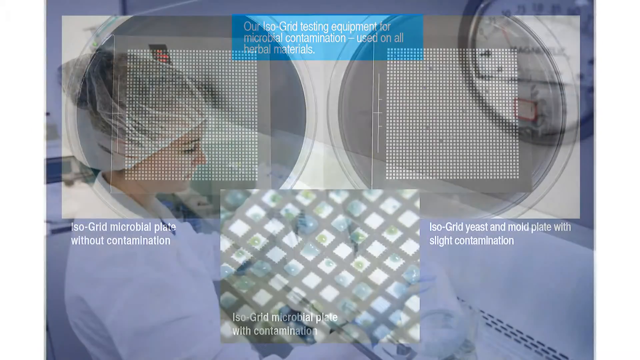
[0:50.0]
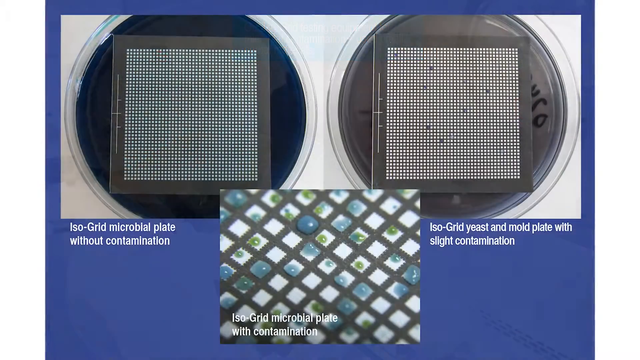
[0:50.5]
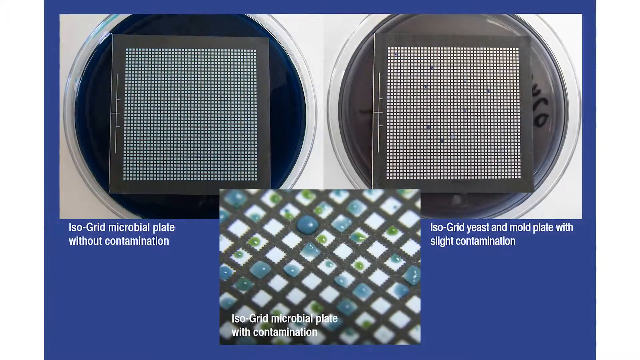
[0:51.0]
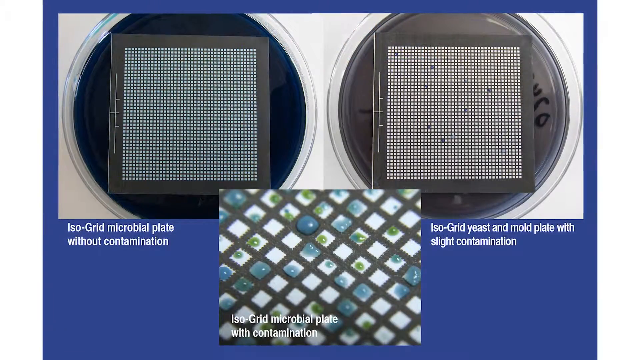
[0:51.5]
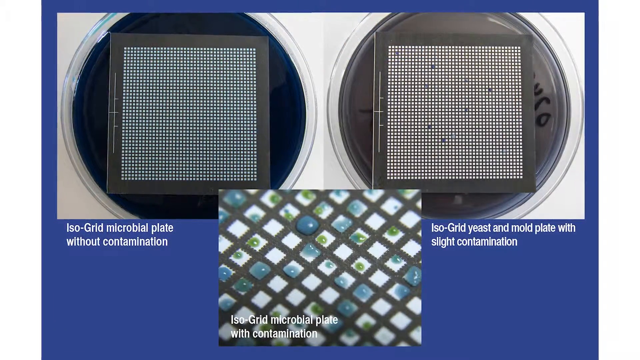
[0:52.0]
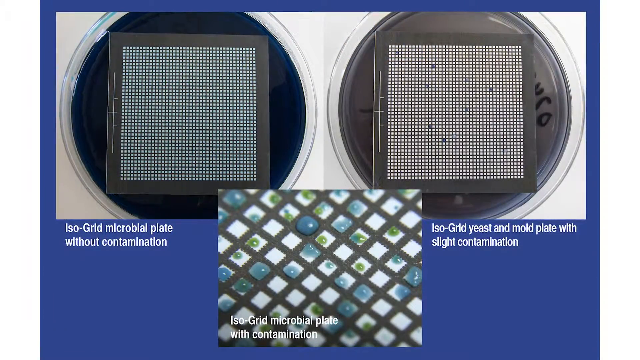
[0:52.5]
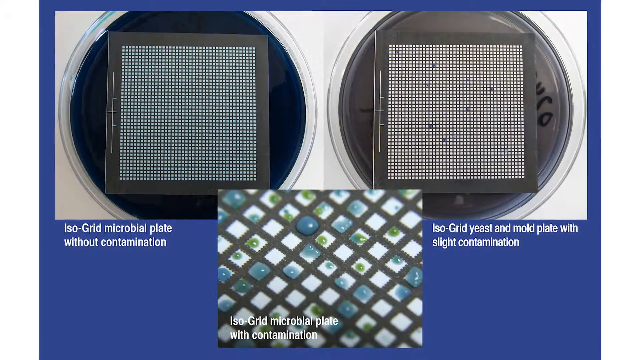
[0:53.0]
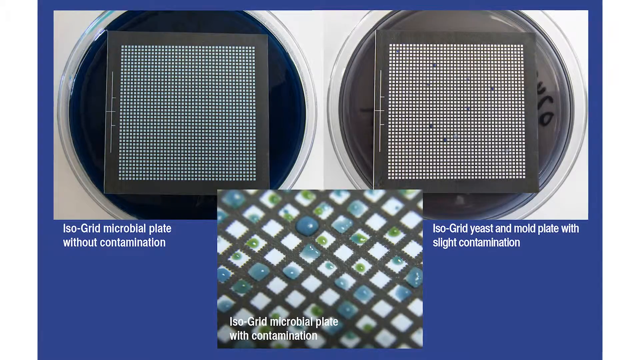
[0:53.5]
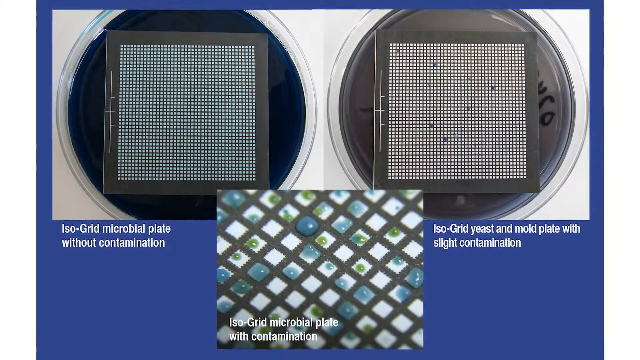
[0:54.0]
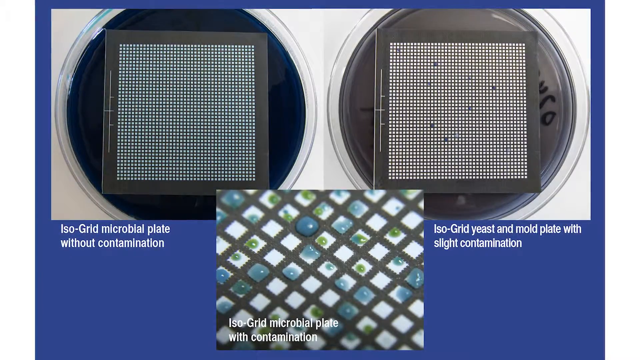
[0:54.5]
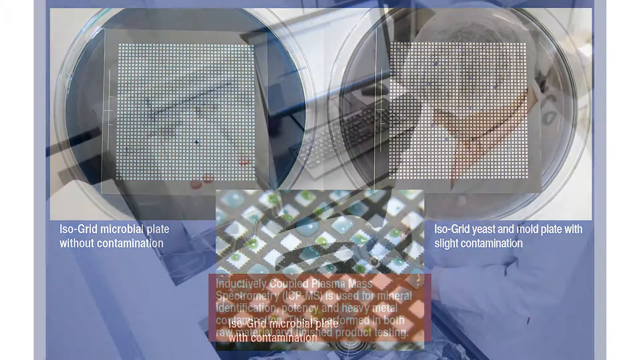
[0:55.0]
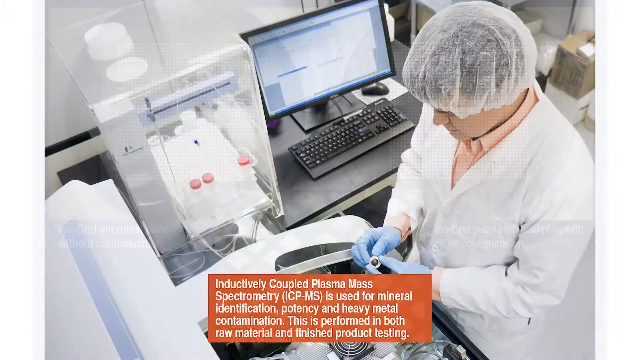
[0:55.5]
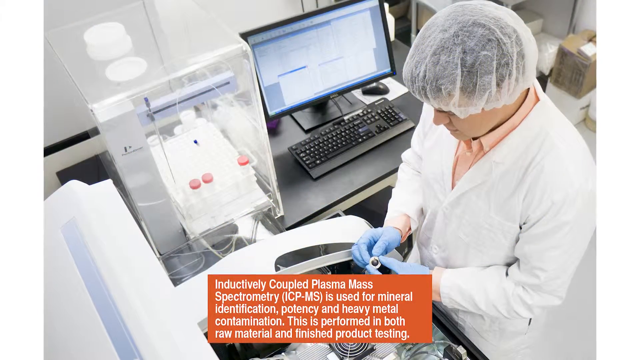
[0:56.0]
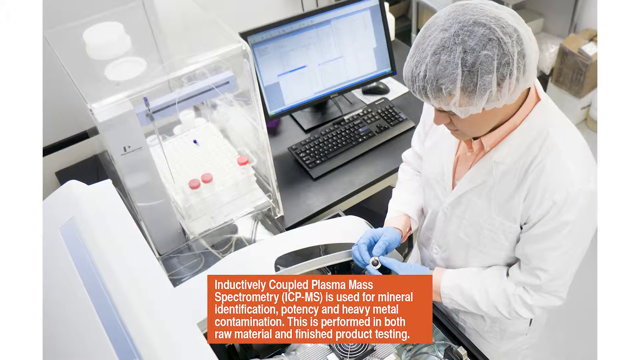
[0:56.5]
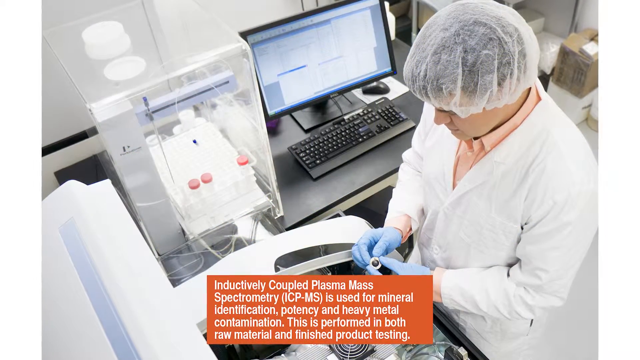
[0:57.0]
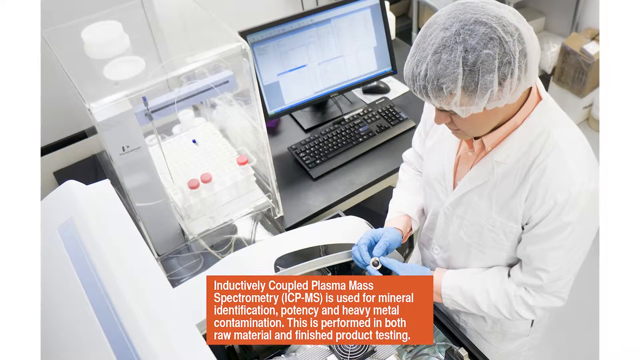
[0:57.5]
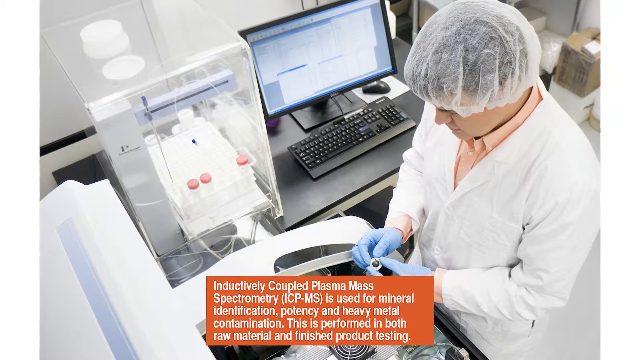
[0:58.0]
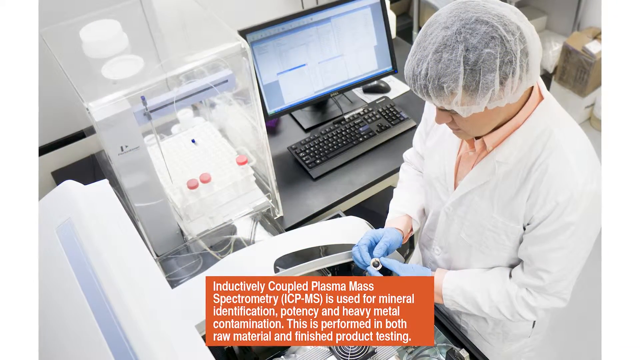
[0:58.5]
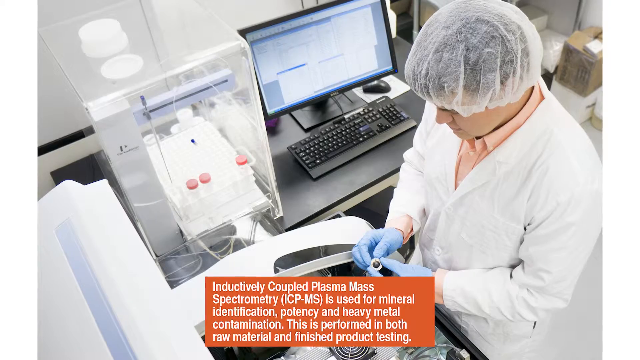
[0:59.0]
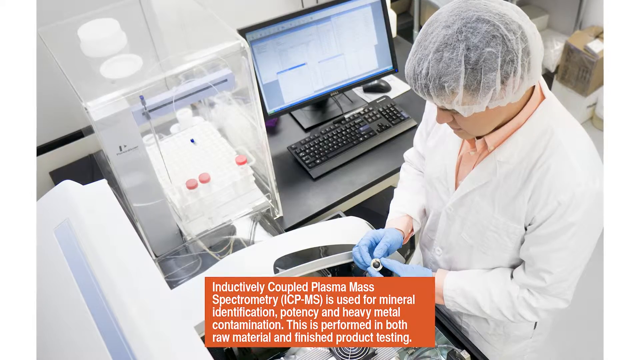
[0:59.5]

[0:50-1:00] A still photograph shows two similar images side by side. The first is of a black square containing a bunch of little silver squares, with a clear circular dish behind it that looks like a petri dish. The image on the right is very similar, except there are some gaps where the silver squares are. Below them is a zoomed-in picture that looks like it might be zoomed-in detail of the item. The slide then changes to an overview shot of a man working in a lab, wearing a white lab coat and a white hairnet and handling something in his hands.